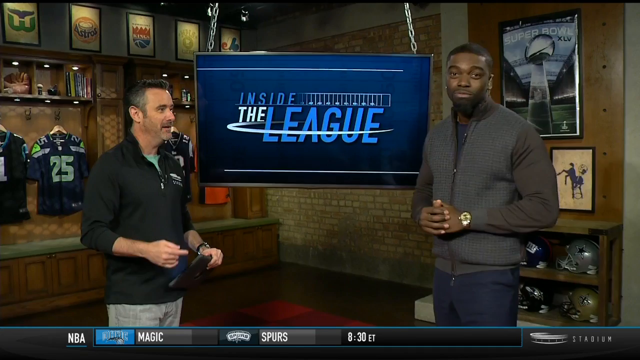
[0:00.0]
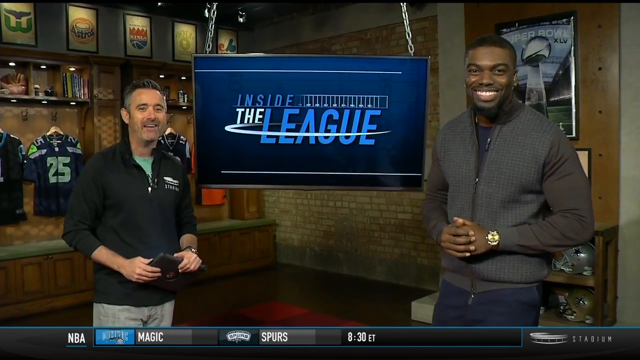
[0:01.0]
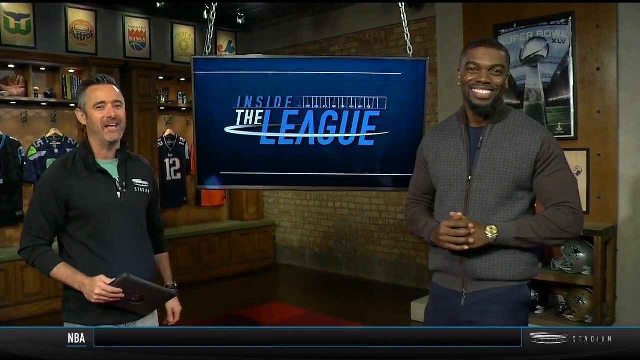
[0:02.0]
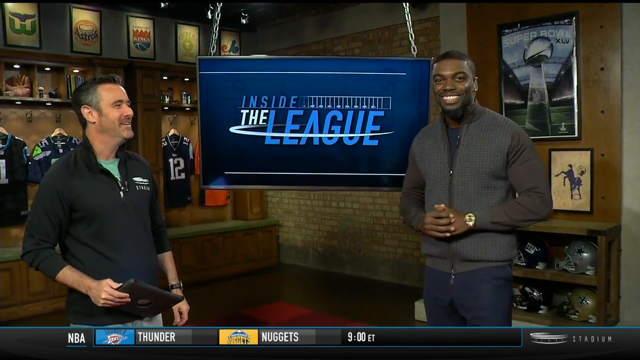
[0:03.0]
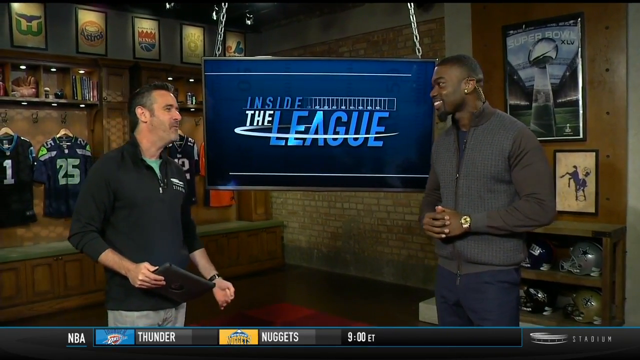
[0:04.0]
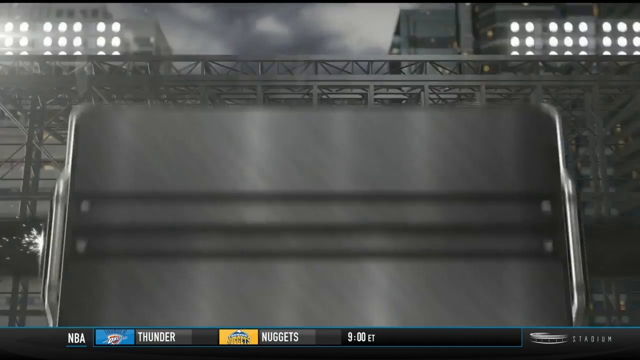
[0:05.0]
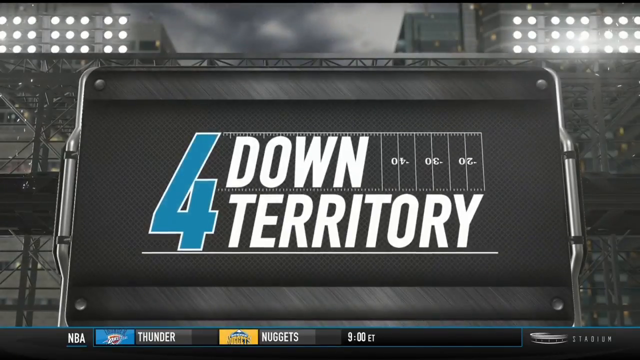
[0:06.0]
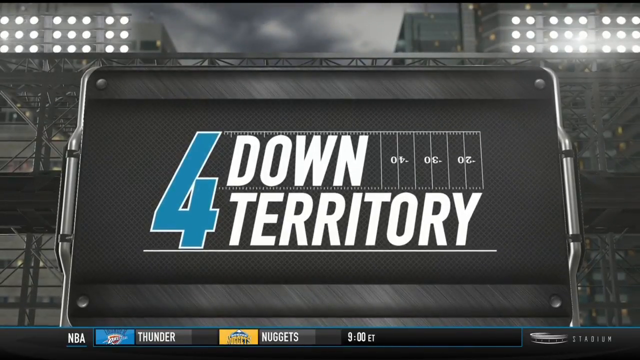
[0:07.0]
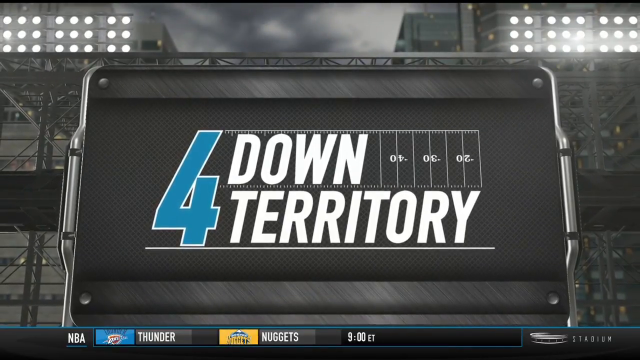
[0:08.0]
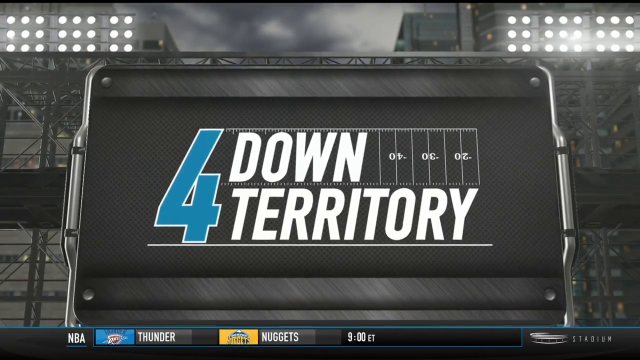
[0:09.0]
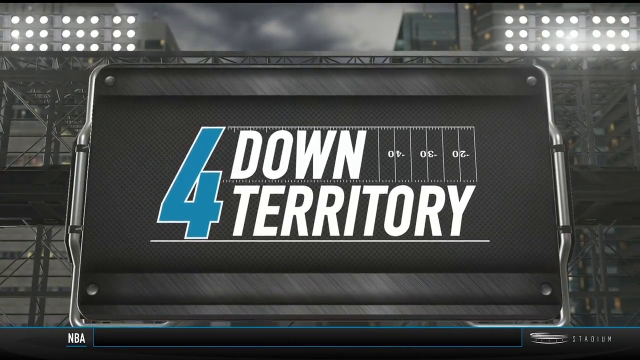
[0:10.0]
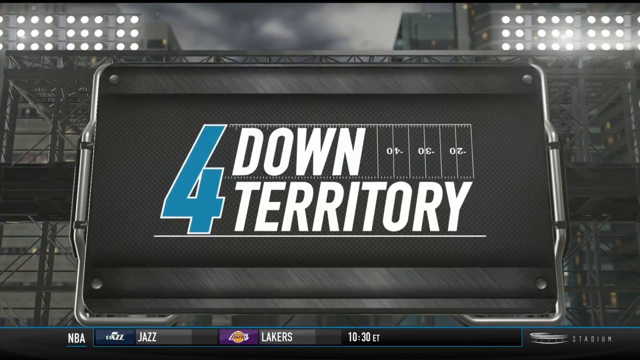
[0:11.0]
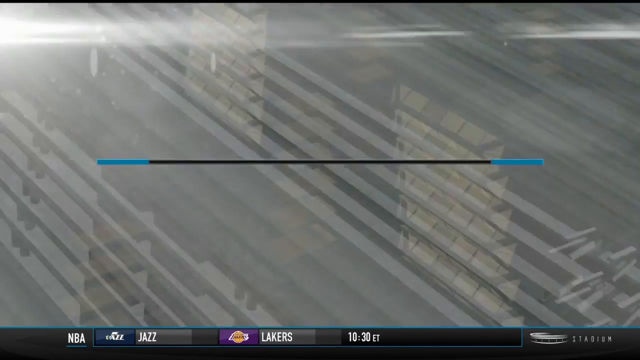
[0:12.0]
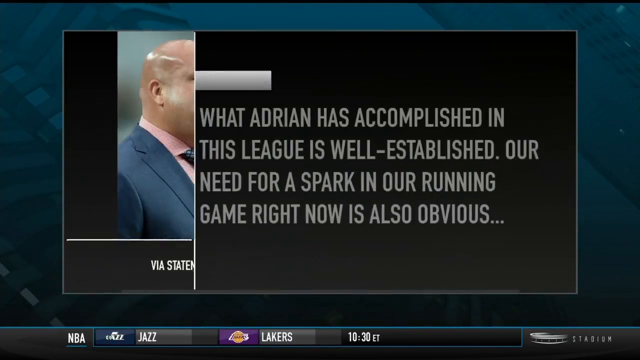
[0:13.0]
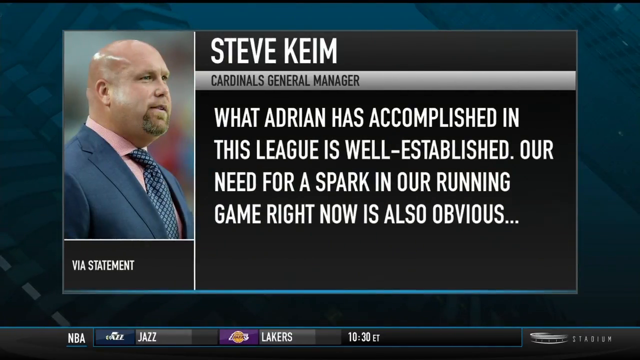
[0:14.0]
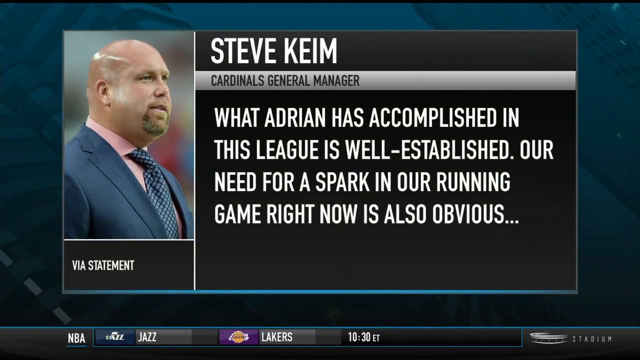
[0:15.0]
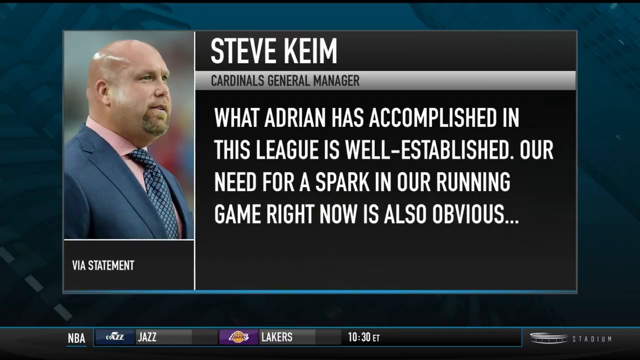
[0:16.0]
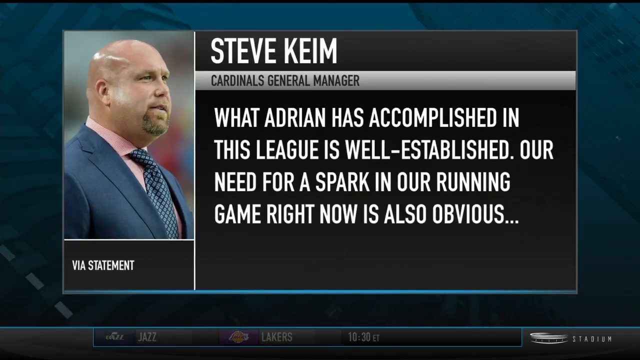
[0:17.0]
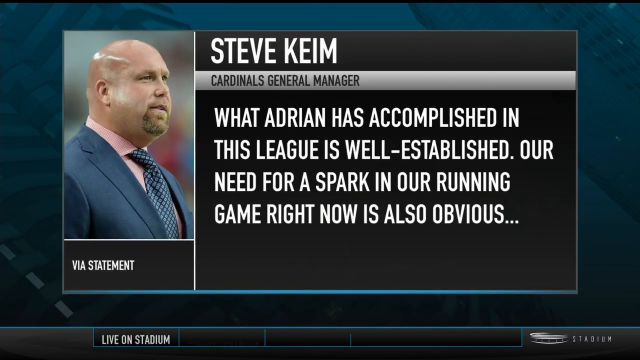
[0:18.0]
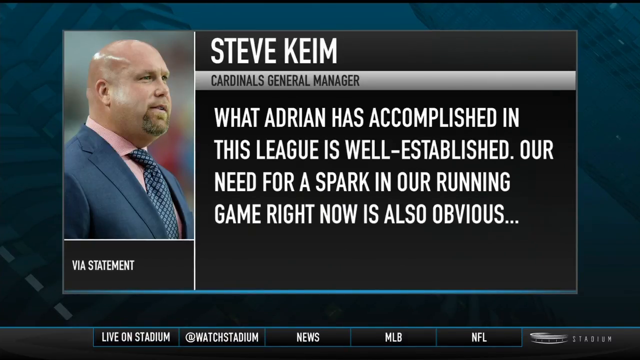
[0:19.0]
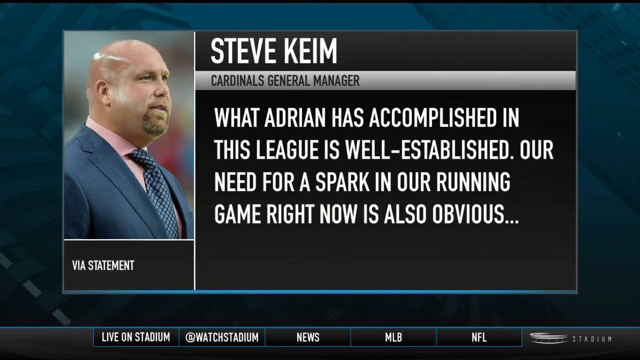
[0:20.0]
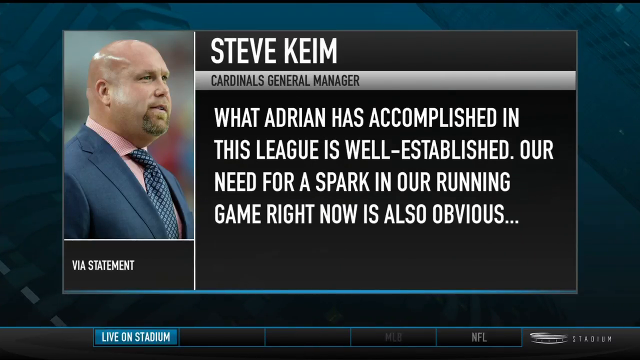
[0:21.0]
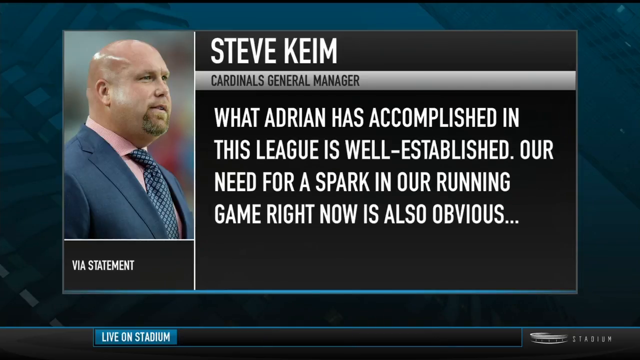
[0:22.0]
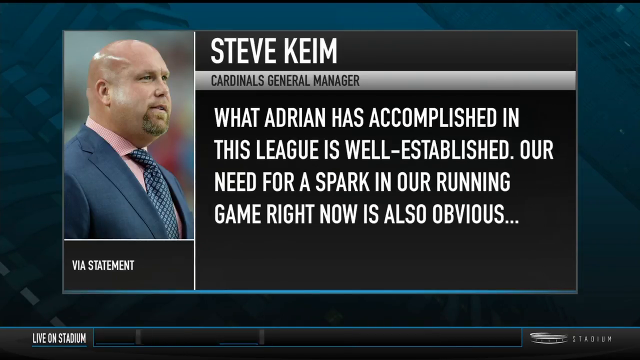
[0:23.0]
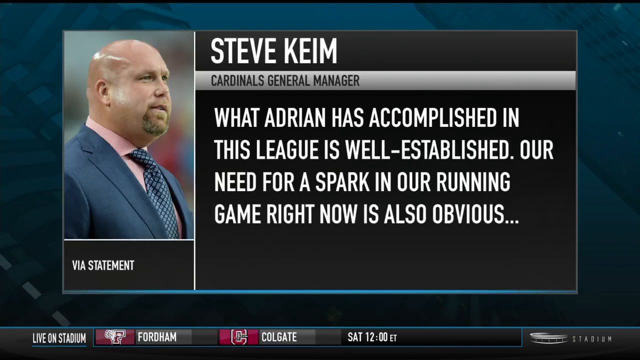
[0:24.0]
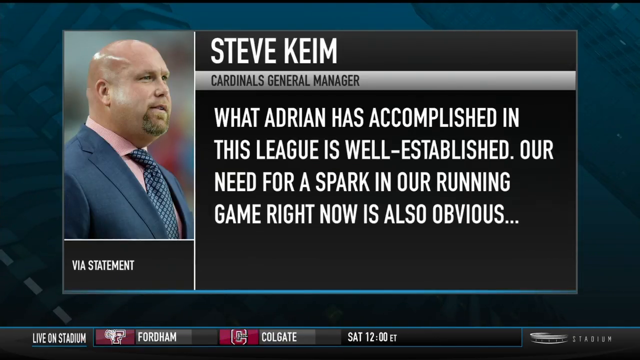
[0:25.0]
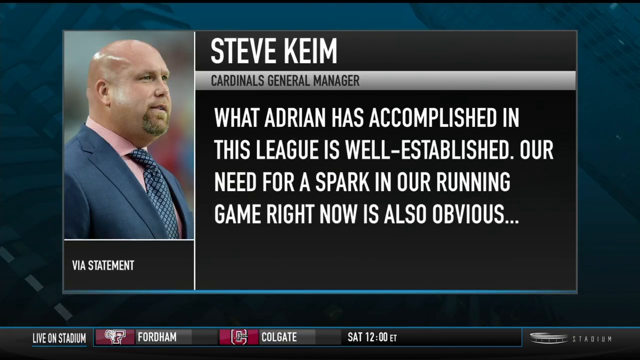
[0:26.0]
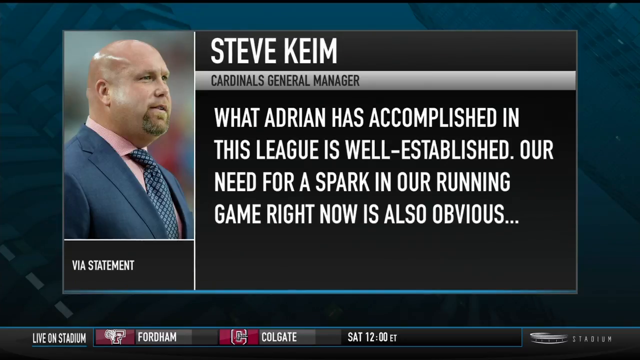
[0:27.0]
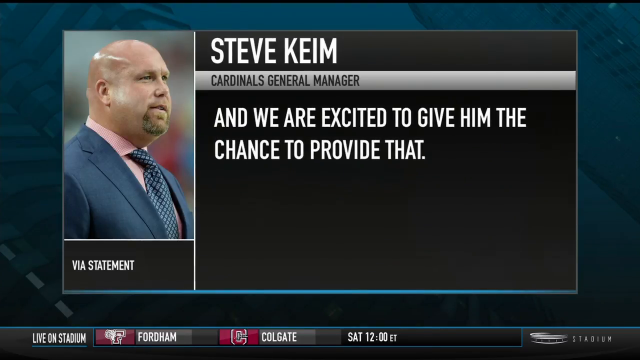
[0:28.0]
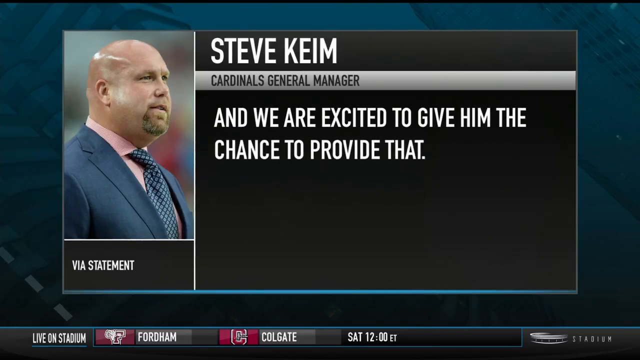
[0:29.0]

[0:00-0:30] A sports show opens with a large TV screen hanging by two chains from the ceiling. It reads "INSIDE THE LEAGUE" in all caps: "THE" is in white, "INSIDE" and "LEAGUE" are in blue, "LEAGUE" is much larger, and a white line sort of swooshes around in front of "LEAGUE." Two men are shown from the knee up. The man on the right is Black, with short black hair and a shadow of, or short, mustache and beard; he wears a zipped-up dark gray cardigan over a dark gray shirt, with dark gray or black pants. The Caucasian man on the left wears an open, black, long-sleeved quarter-zip hoodie that zips a little around the chest, with a teal t-shirt peeking out, and gray pants. Behind them is a brick wall with sports memorabilia, including hanging football jerseys on the left. The man on the left looks at the man on the right, who looks at the camera and smiles, and they talk to each other, apparently about a football game. A graphic appears with a lot of gray in the background, hardware and stadium lights, a large blue number four outlined in white, and "down territory" in white all caps on two lines; to the right is a white outline of a football field showing some of the yard markings. Another graphic follows, apparently a quote. On the left is a picture of a bald white man in a blue suit coat, a blue and white patterned tie and a pink button-down shirt, looking to the right. Beneath it, small white text reads "via statement." In a black text box to the right of the picture, all caps read "Steve Keim," and a gray banner below reads "Cardinals General Manager" in black all caps. The quote appears in white all caps: "What Adrian has accomplished in this league is well-established. Our need for spark in our running game right now is also obvious." That text disappears and the rest of the quote comes up: "And we are excited to give him the chance to provide that."